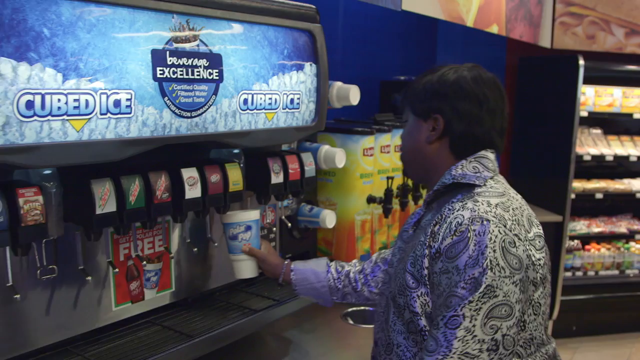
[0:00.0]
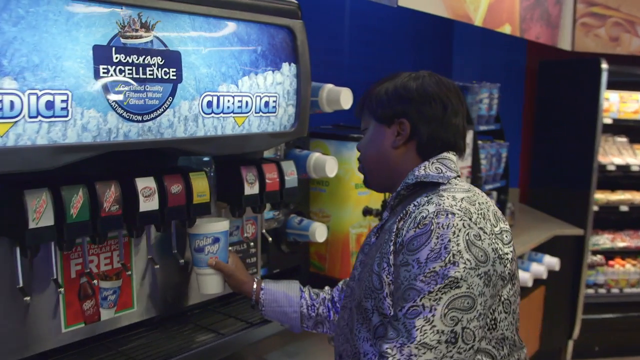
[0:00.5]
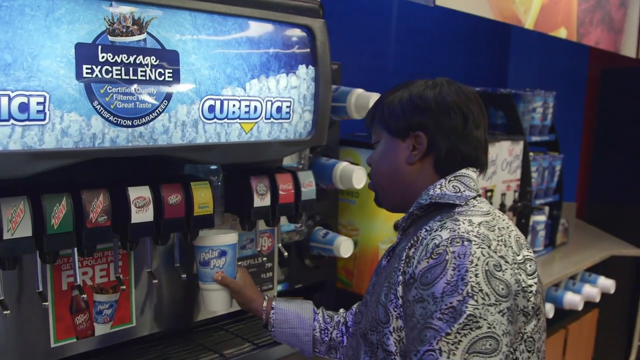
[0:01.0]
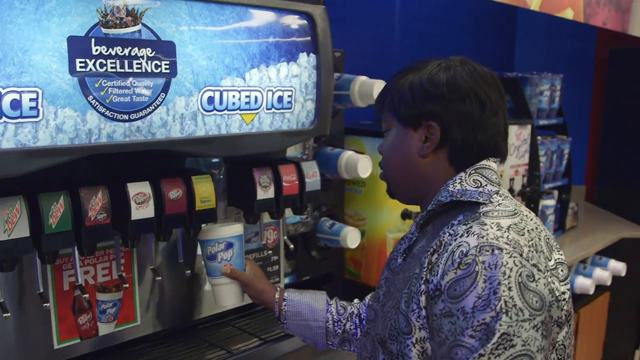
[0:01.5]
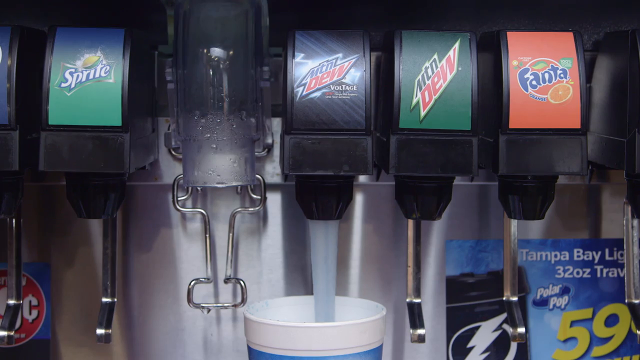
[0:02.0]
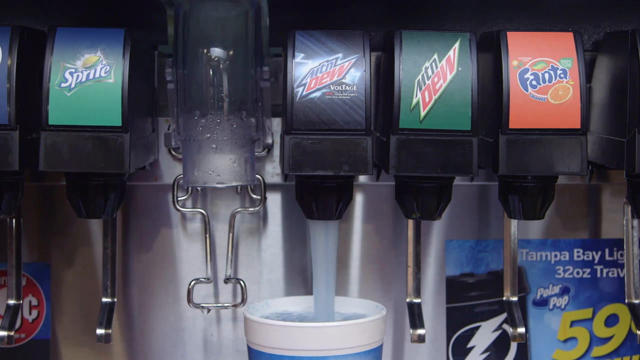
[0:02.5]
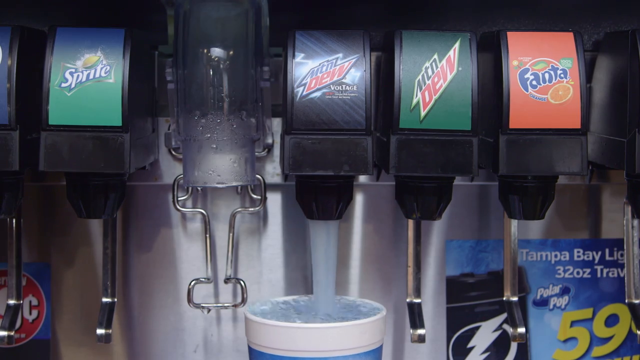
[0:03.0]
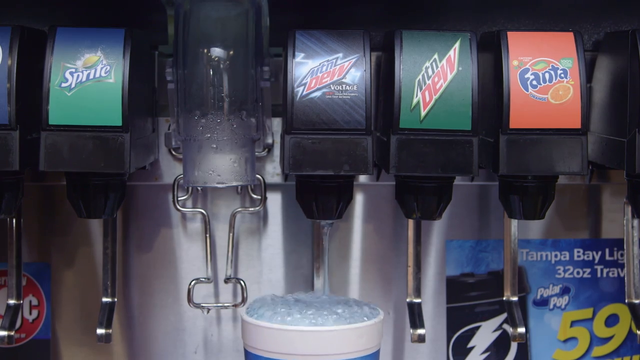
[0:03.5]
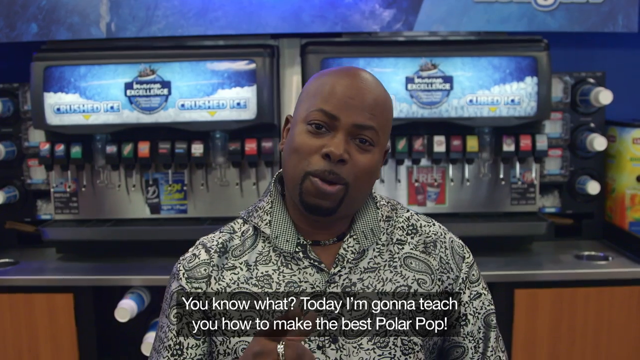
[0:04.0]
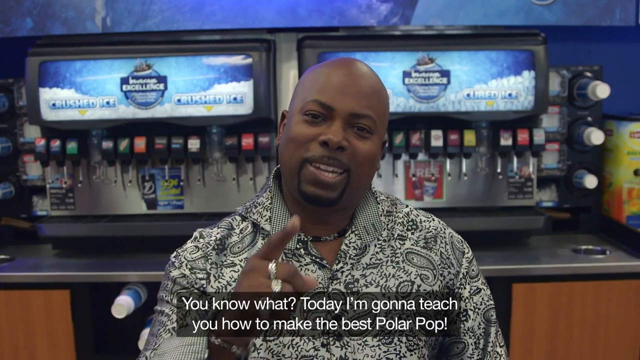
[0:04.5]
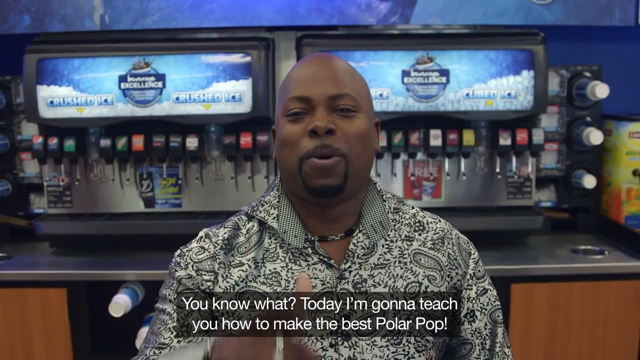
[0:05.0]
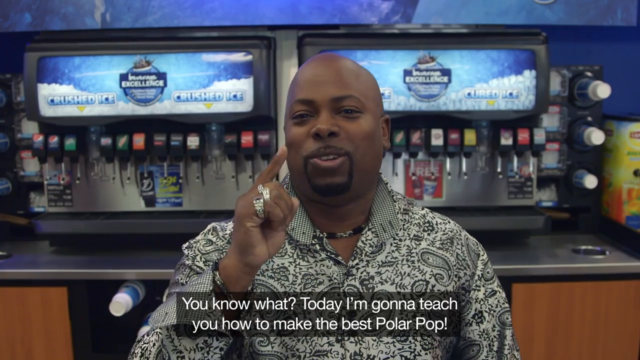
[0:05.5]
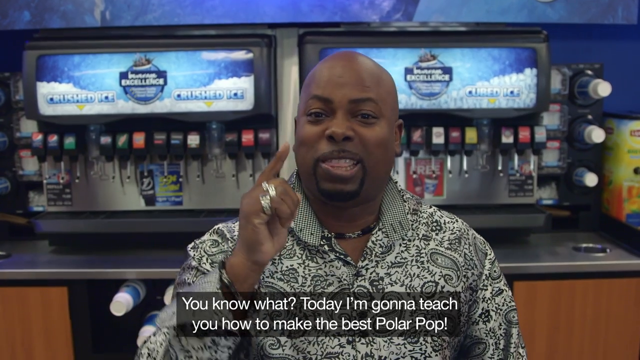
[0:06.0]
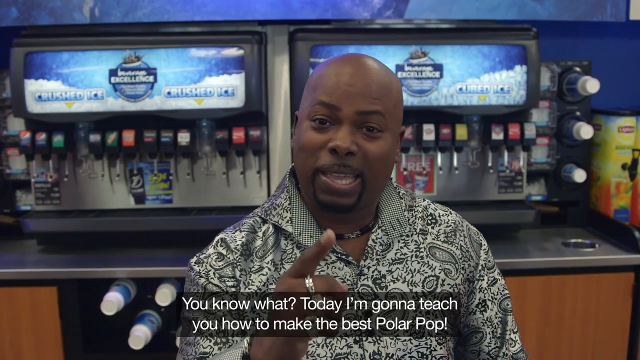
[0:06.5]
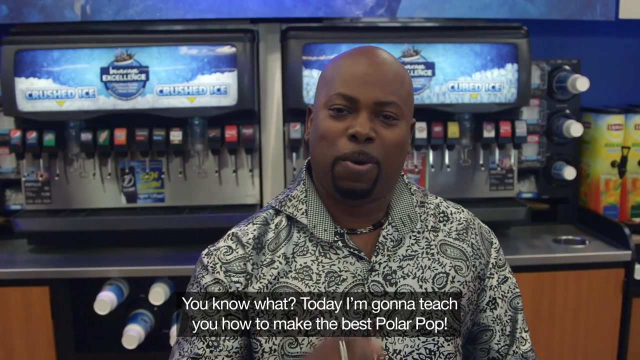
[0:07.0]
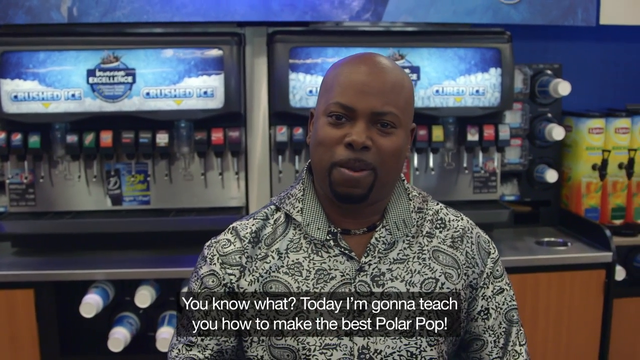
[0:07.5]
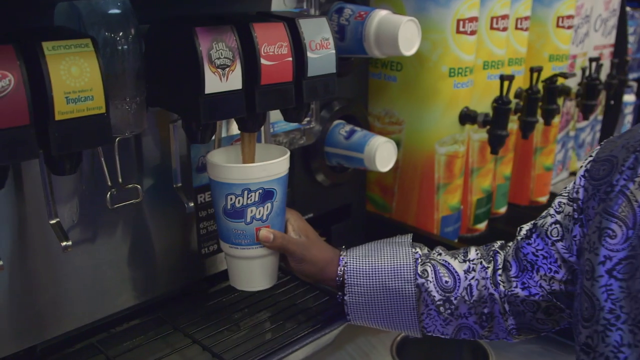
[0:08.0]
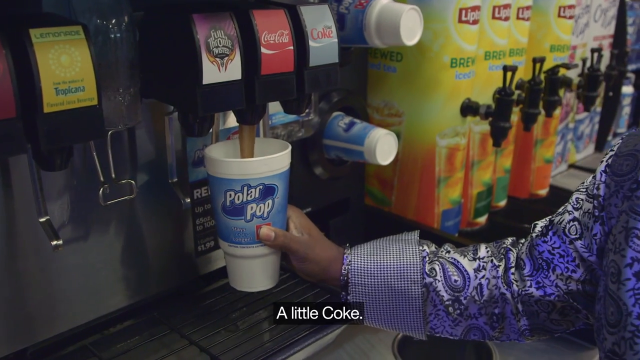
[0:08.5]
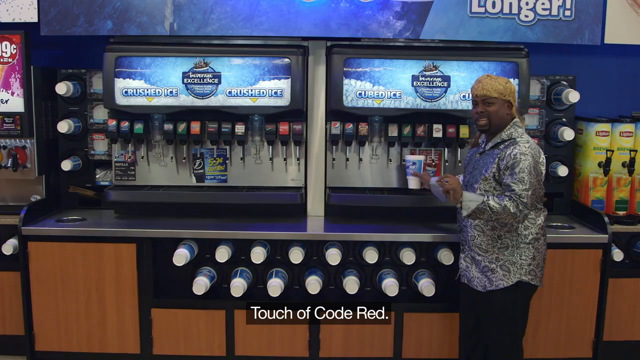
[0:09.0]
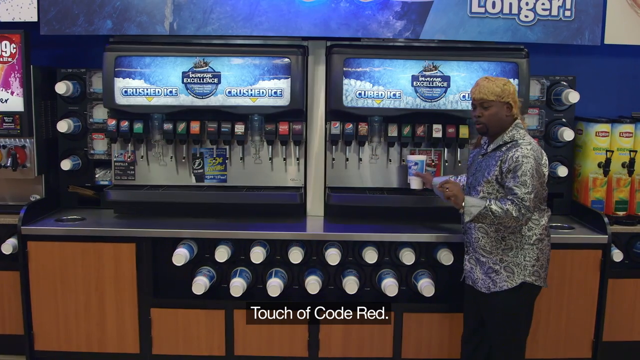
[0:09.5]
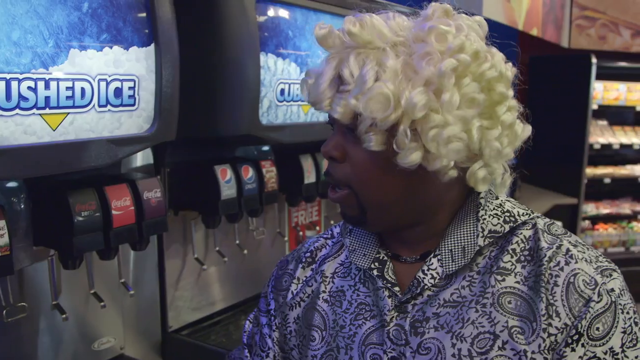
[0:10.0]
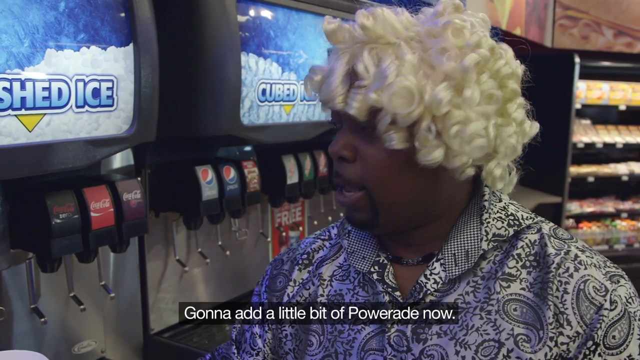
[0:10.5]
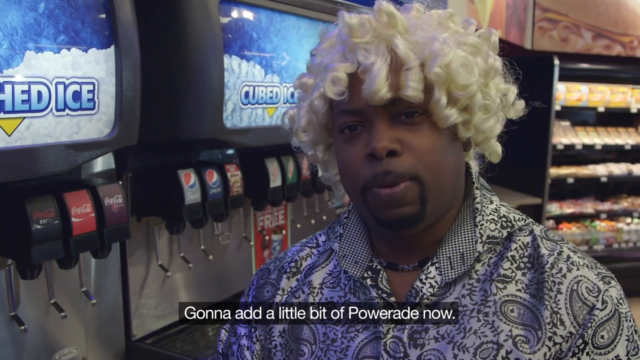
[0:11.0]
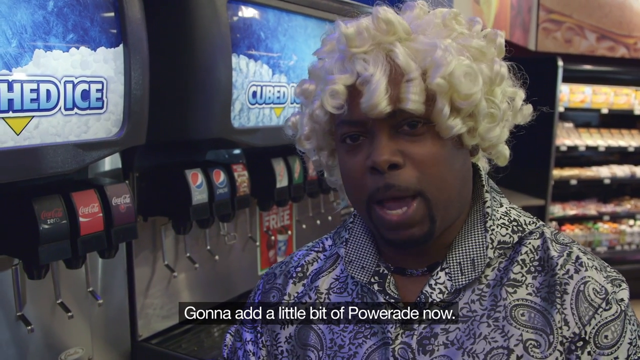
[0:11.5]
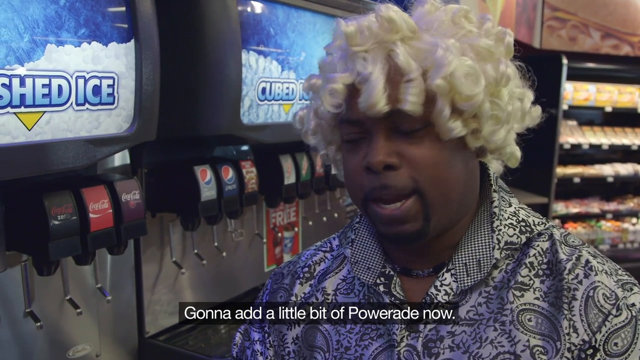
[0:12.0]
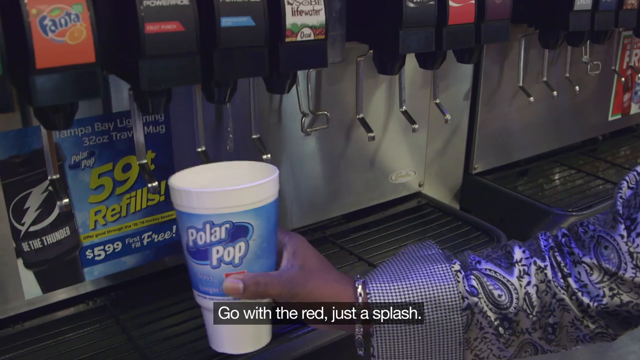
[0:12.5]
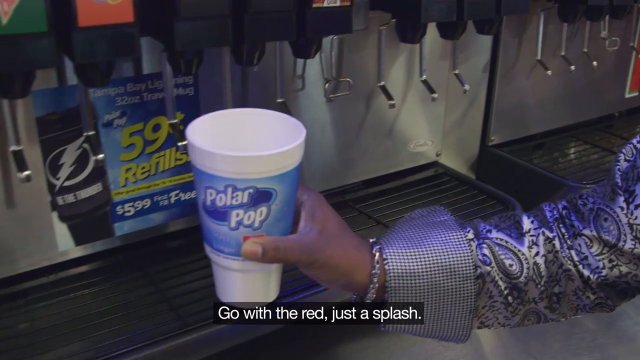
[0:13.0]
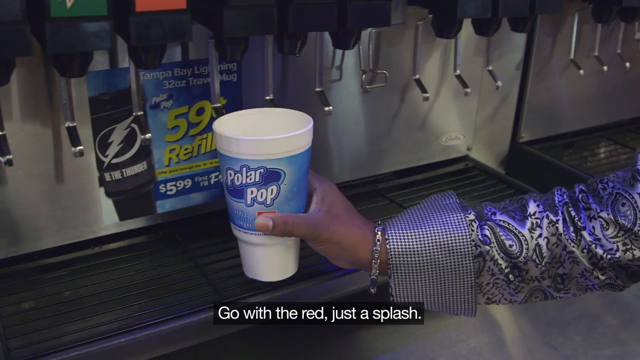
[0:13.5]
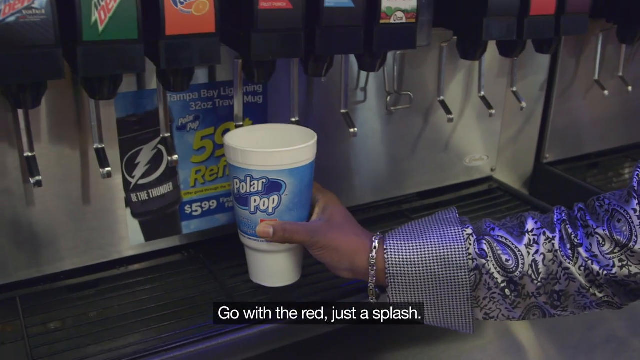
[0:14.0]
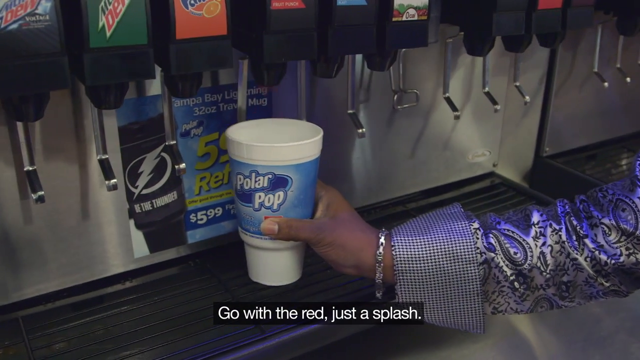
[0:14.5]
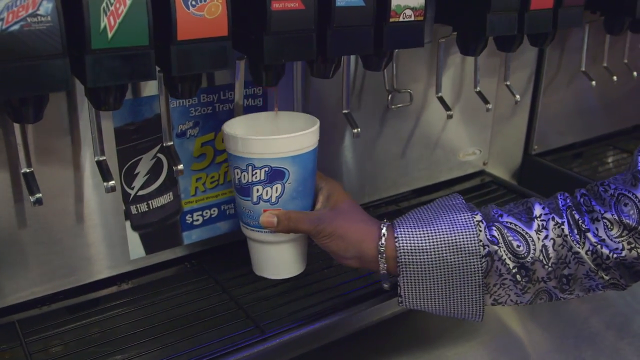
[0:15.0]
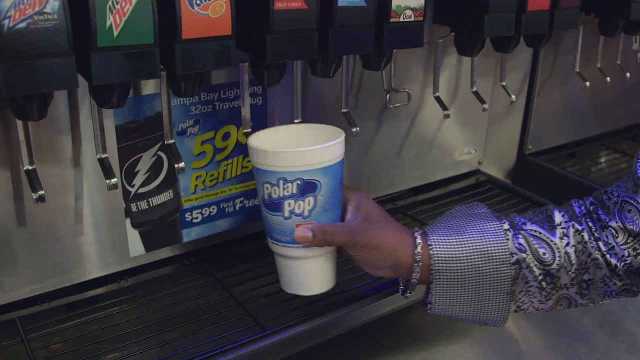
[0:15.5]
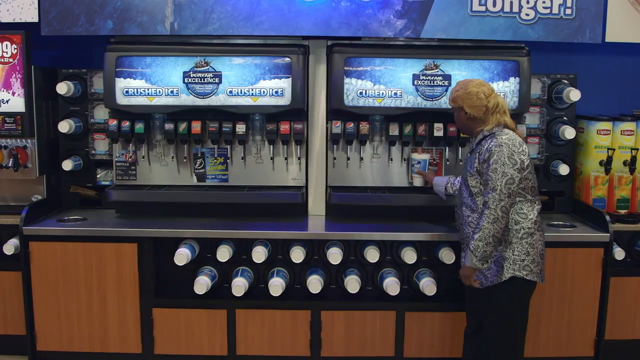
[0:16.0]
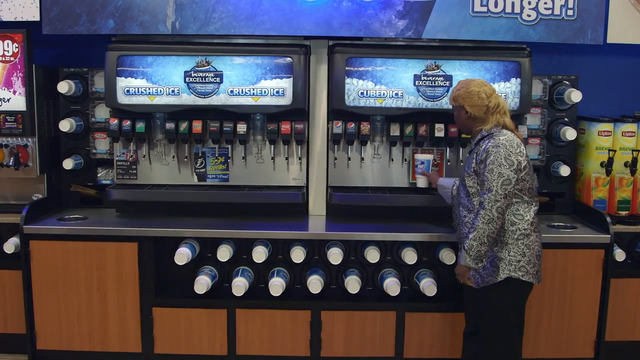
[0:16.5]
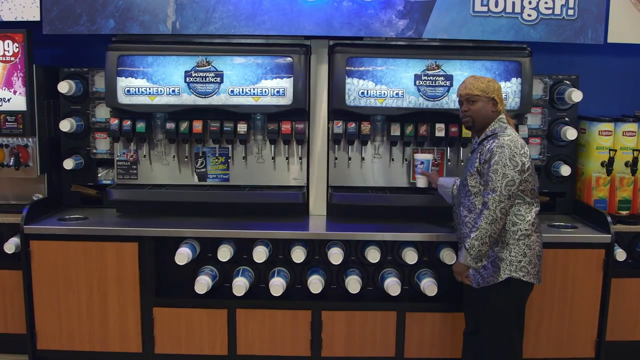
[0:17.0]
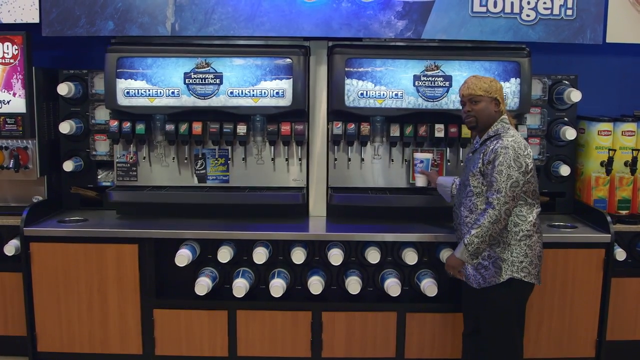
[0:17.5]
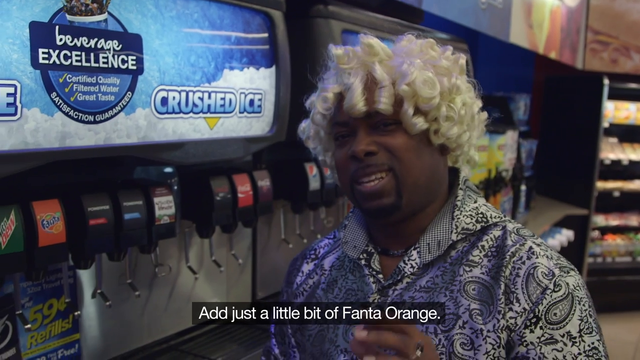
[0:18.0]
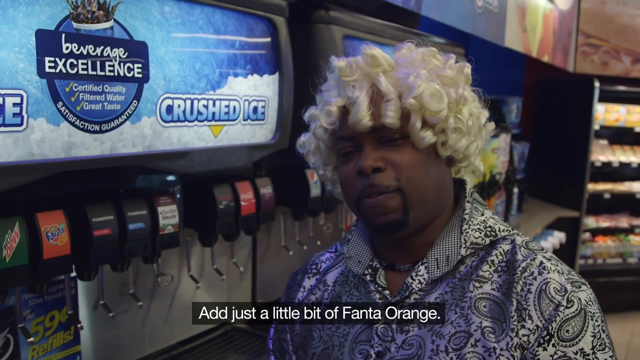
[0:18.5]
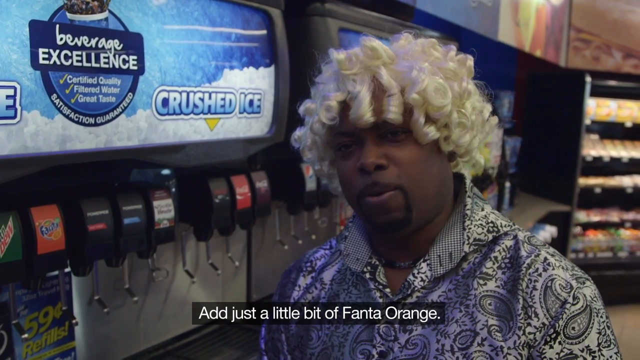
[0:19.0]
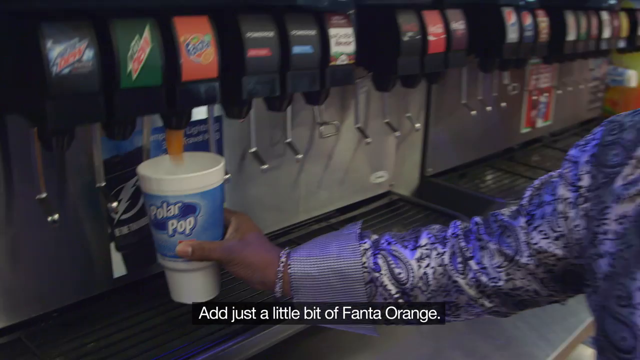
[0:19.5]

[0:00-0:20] A man in a white shirt holds a cup with the name "POP" in blue and points at a machine, wanting to get some soda from it. He leans forward, and Mountain Dew Voltage fills the cup. A guy then says, "You know what, today I'm gonna teach you how to make the best Polar Pop," and goes to the machine. He says to get a touch of cold red, that he's gonna add a little bit of power, to go with the red, just a splash, and to add just a little bit of Fanta. He goes to the machine and selects all the choices as he said he would. He is wearing a wig, a shirt and black pants.